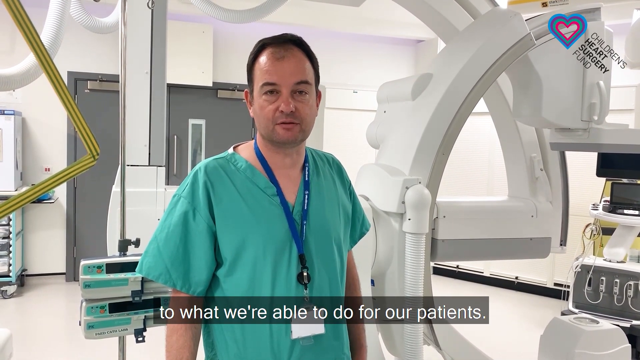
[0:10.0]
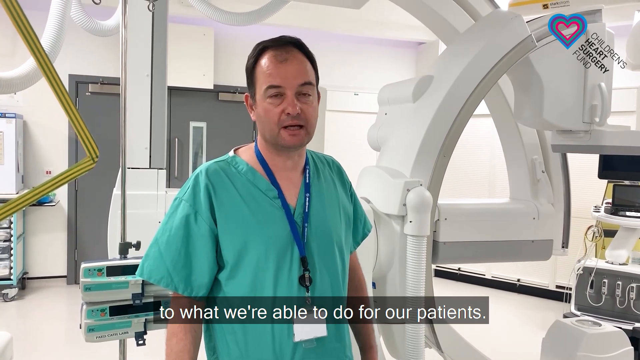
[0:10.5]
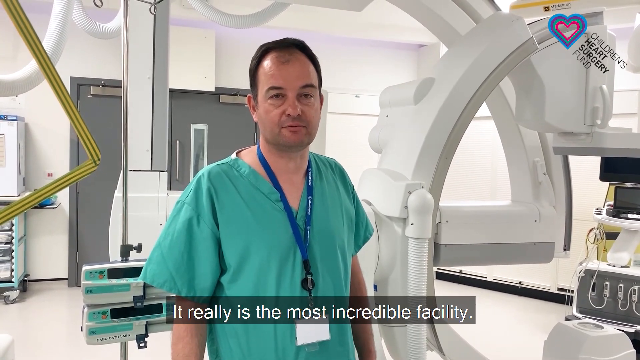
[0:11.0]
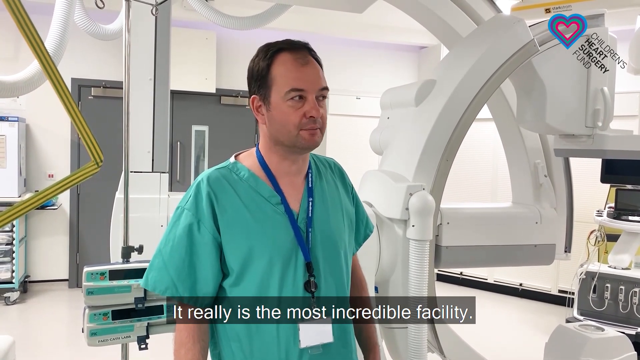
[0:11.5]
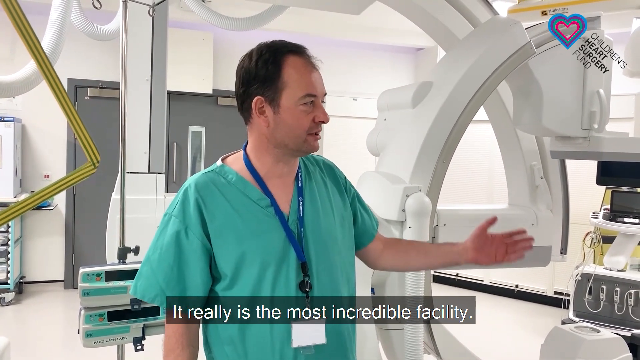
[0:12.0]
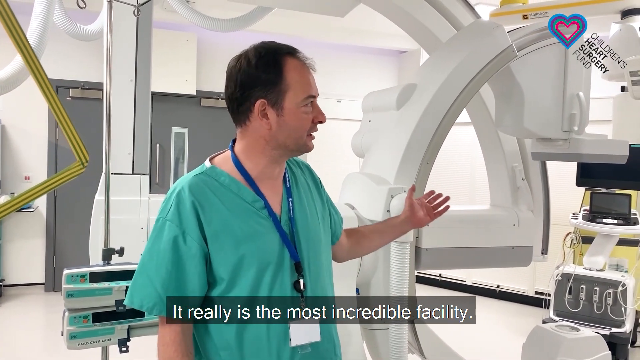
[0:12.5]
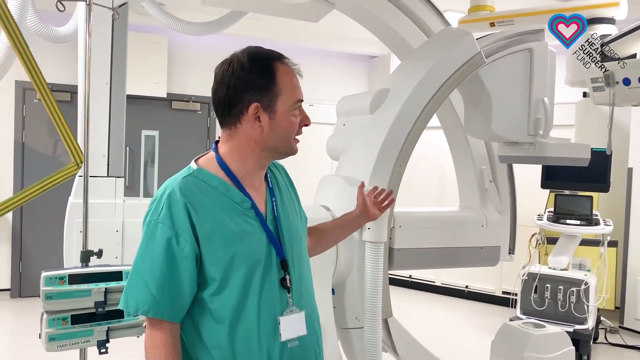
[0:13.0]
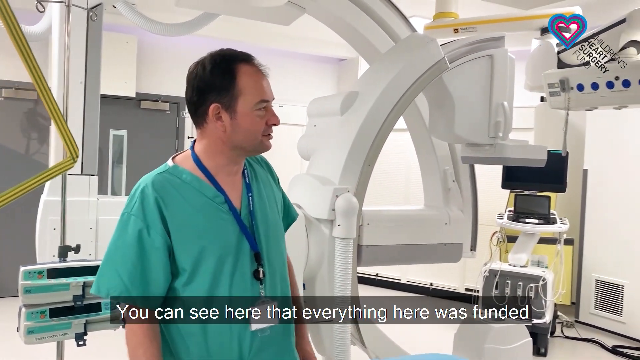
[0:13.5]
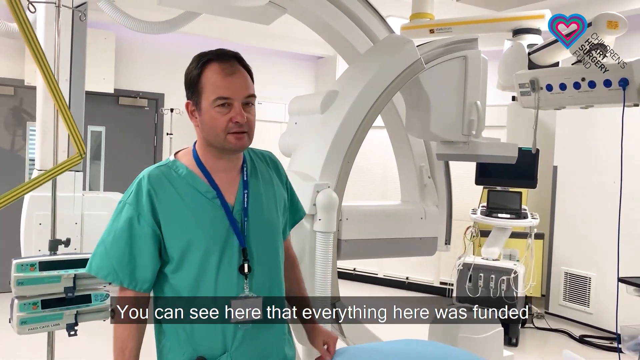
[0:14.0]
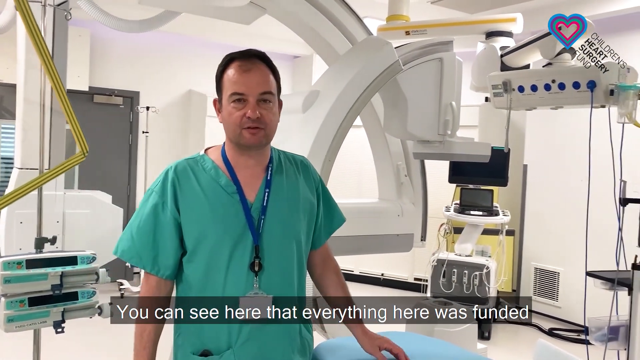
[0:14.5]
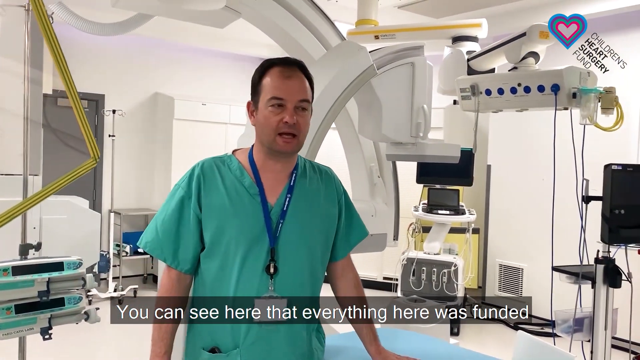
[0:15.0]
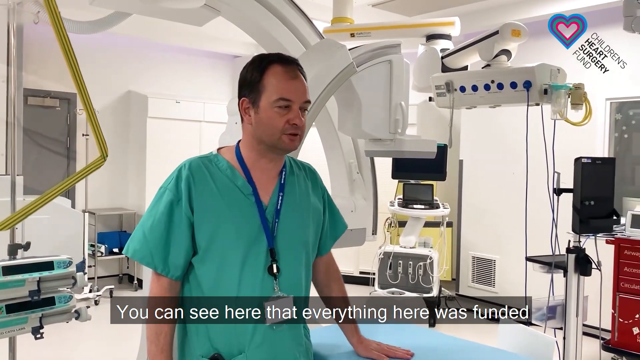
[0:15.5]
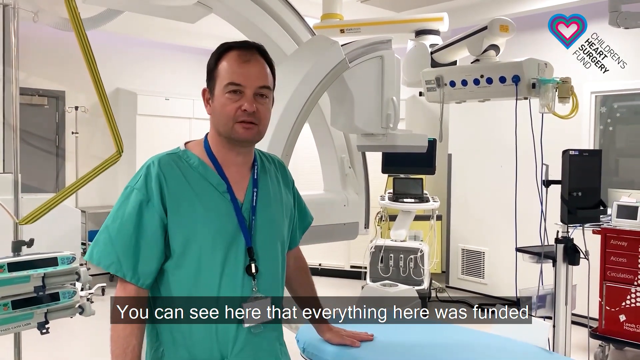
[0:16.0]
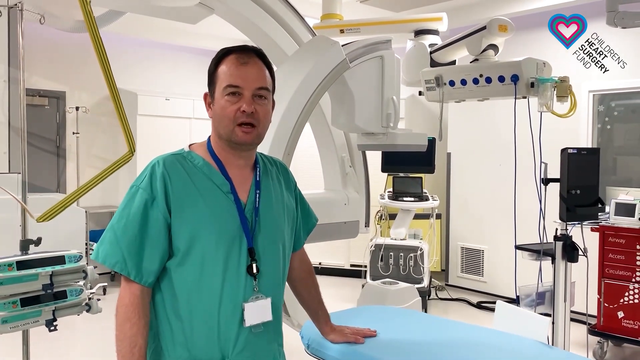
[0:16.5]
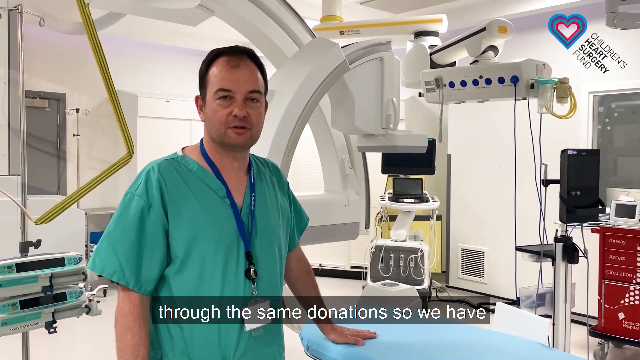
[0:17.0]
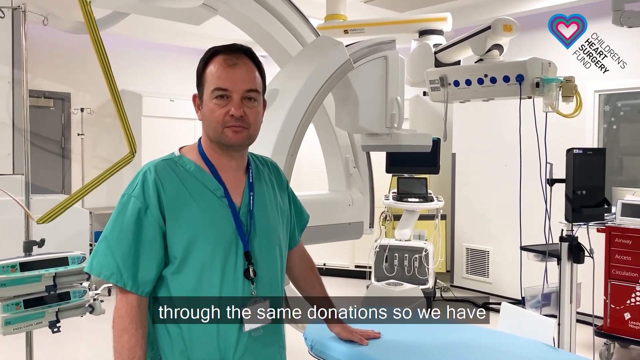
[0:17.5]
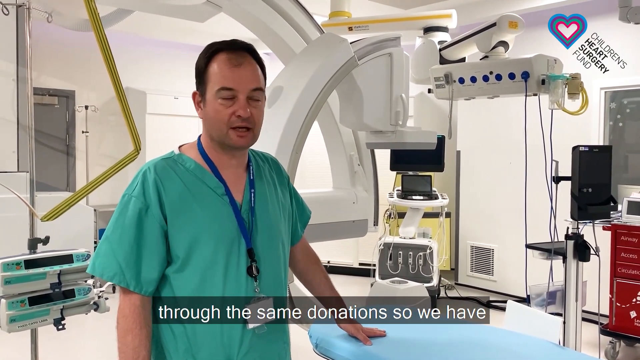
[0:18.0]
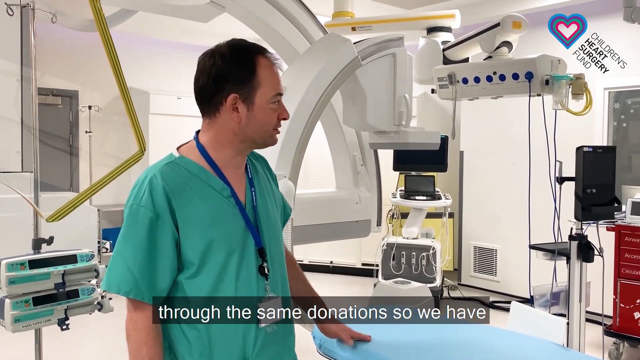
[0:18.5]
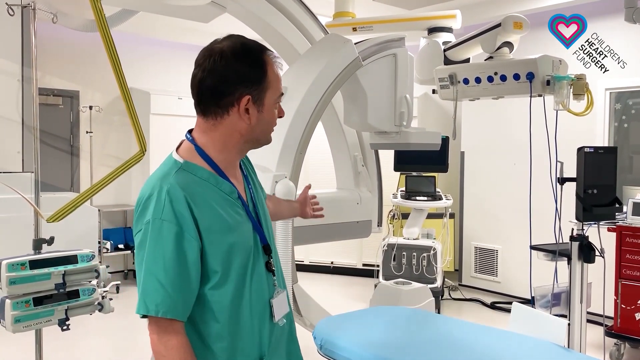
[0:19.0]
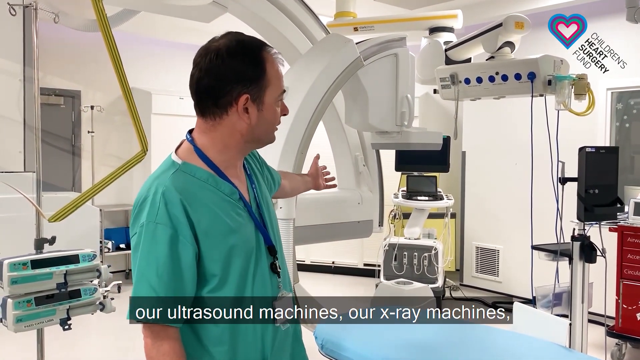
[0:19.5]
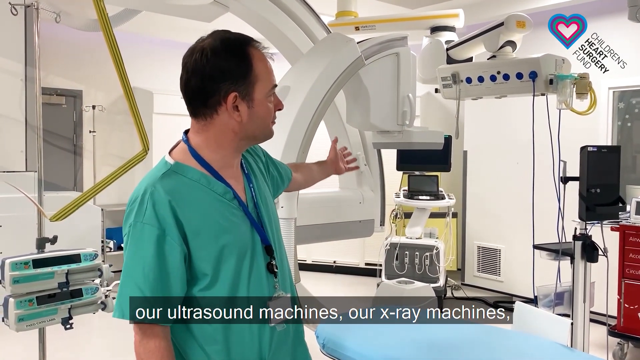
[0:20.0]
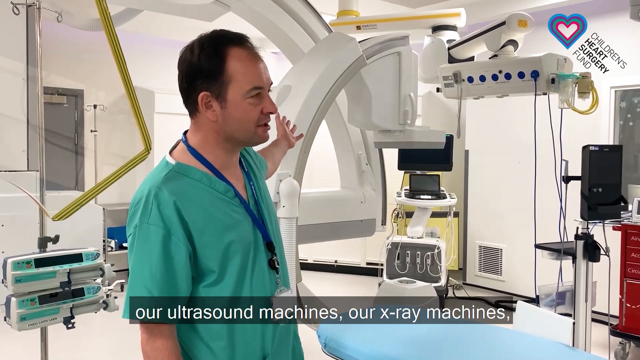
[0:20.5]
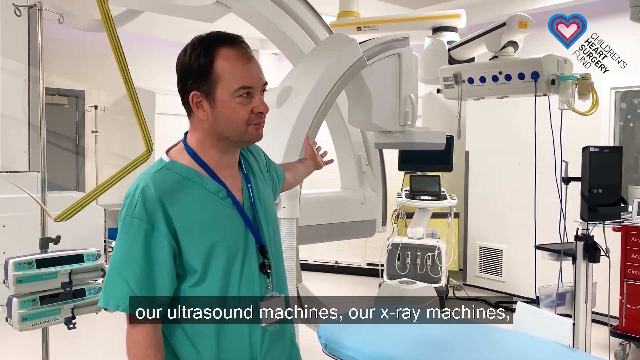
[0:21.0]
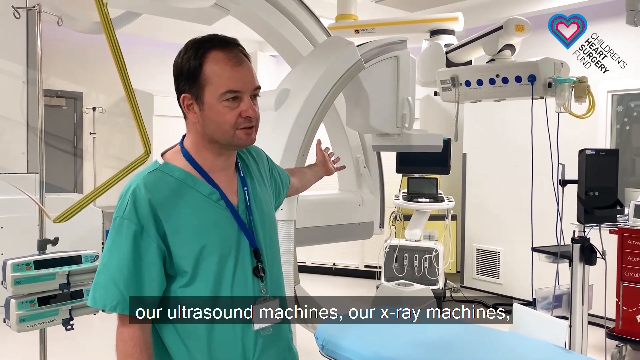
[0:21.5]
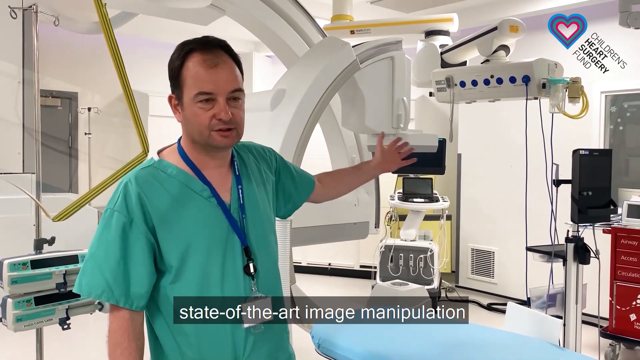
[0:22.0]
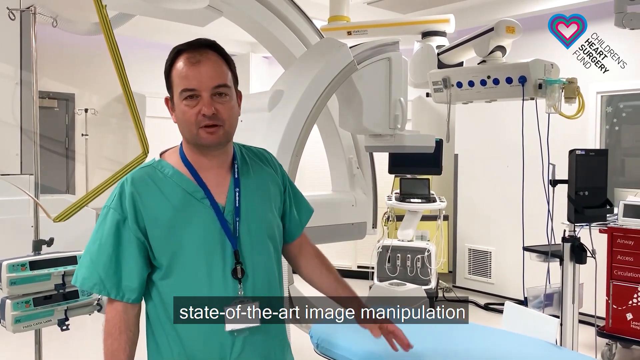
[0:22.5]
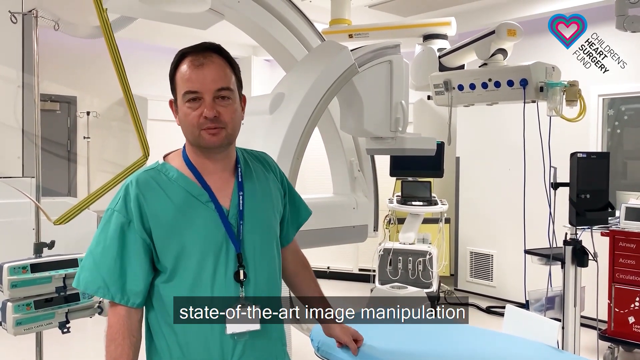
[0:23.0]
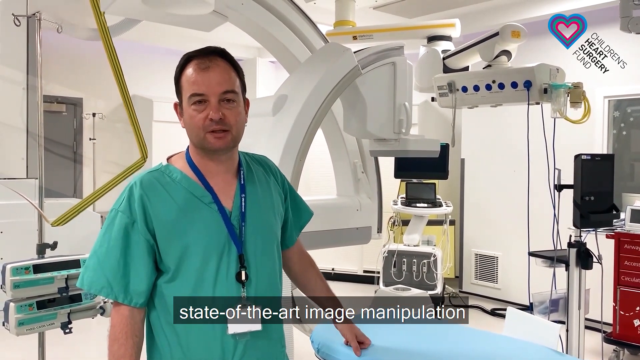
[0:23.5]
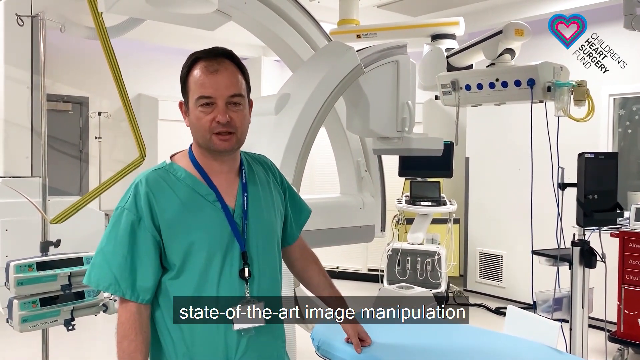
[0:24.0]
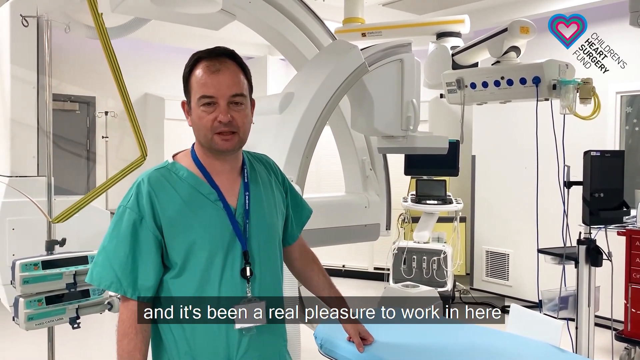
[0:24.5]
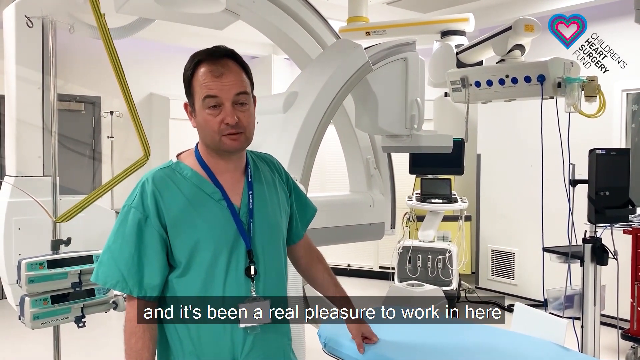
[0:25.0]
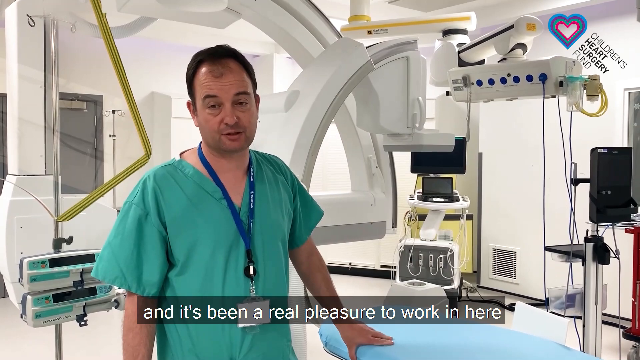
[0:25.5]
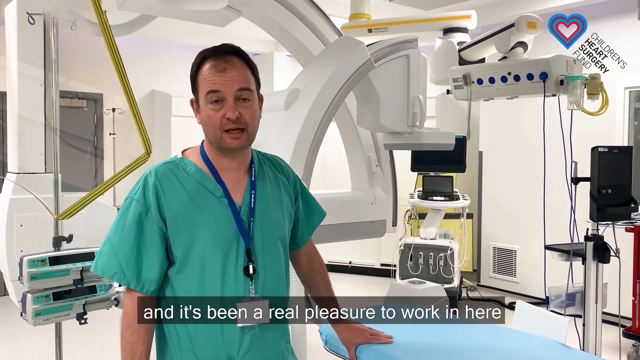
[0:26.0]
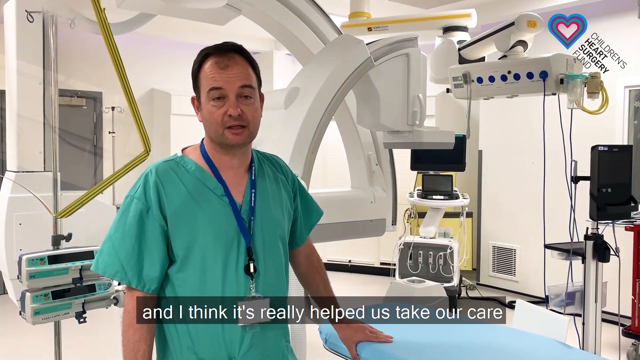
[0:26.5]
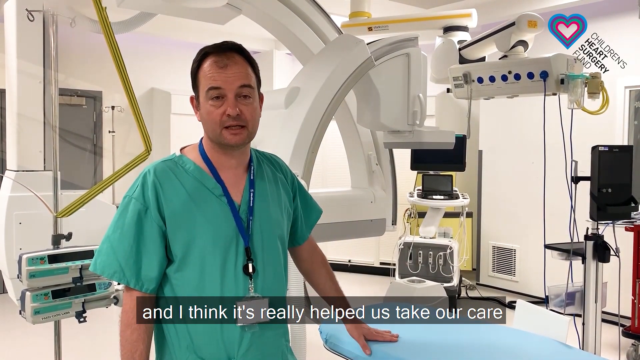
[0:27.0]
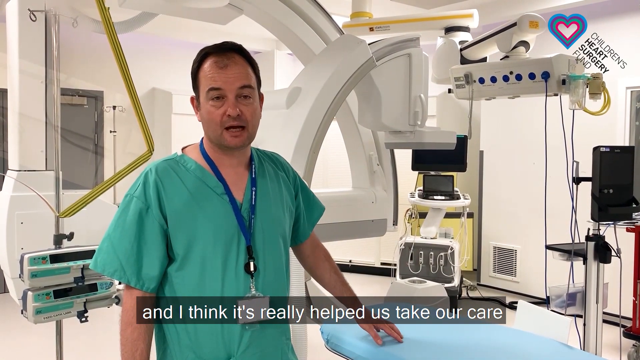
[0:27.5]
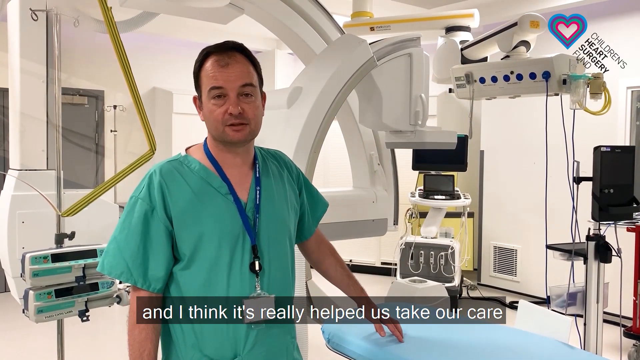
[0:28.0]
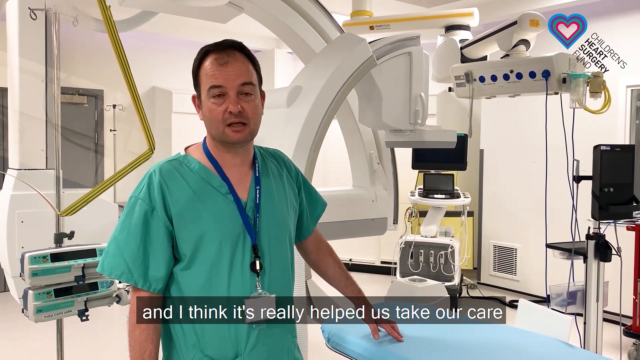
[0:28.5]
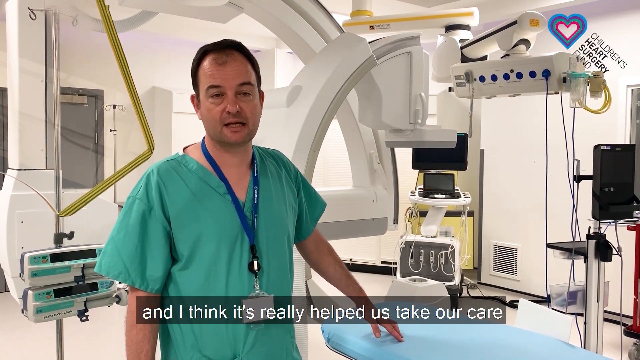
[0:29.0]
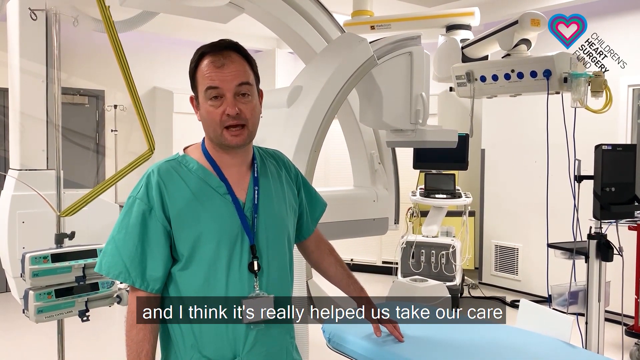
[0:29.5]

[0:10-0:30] Dr. John Thompson continues talking to the viewer. Subtitles run along the bottom, white text over a transparent black background. Among the things he says are "through the same donations. So we have our ultrasound machines, our x-ray machines, state-of-the-art image manipulation. And it's been a real pleasure to work here." Some of the pieces of equipment around him are visible, including a sort of odd banded machine to his left with yellow and black bands stretched over its middle.